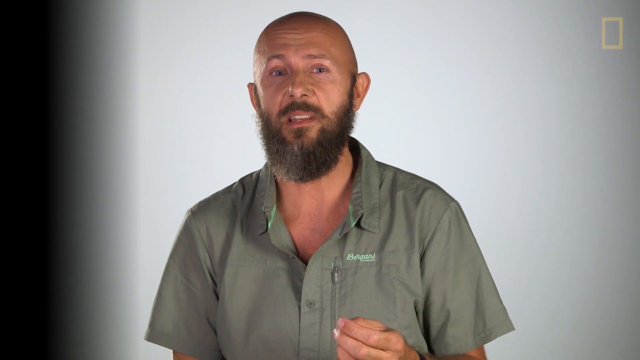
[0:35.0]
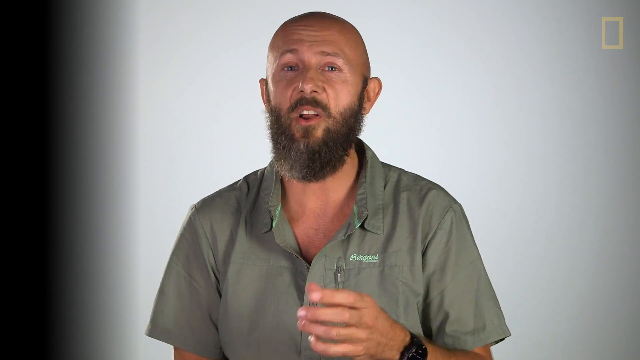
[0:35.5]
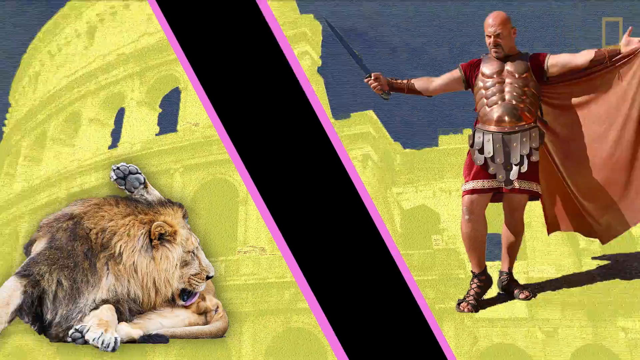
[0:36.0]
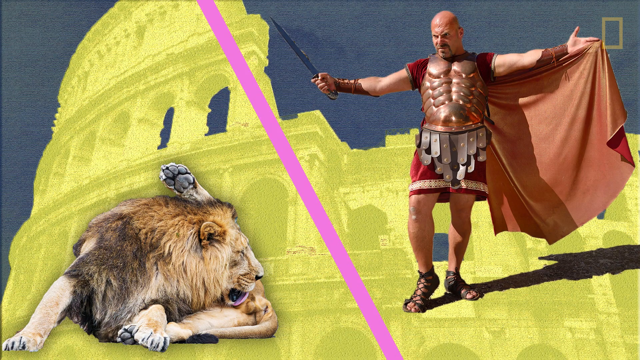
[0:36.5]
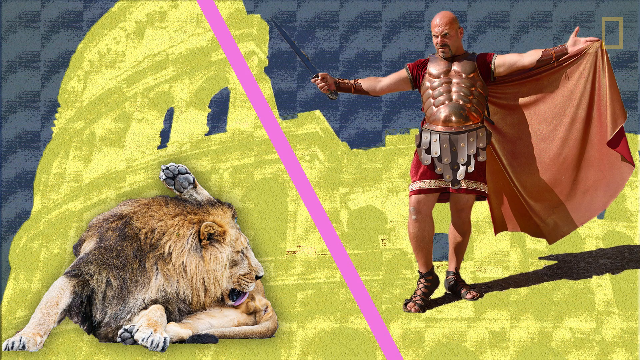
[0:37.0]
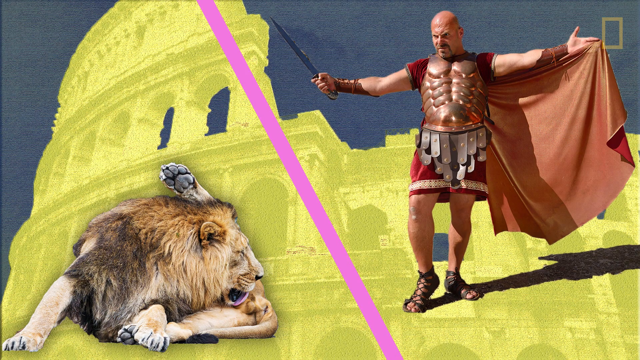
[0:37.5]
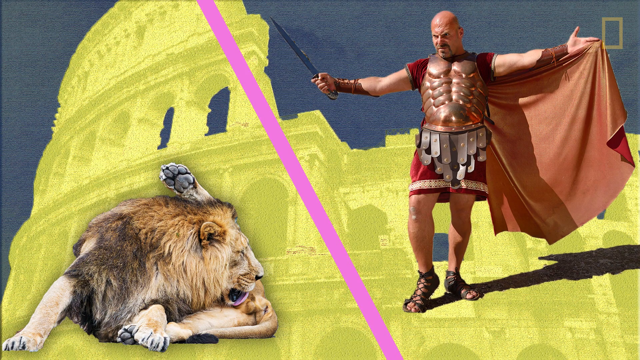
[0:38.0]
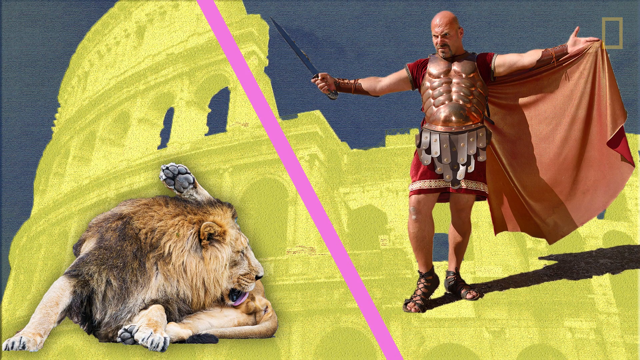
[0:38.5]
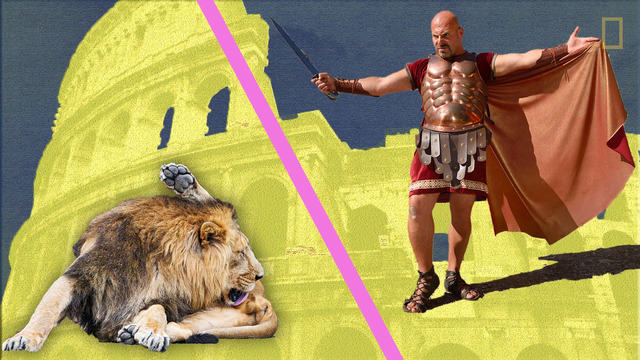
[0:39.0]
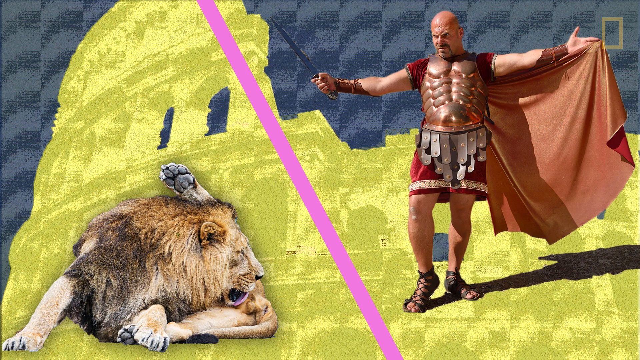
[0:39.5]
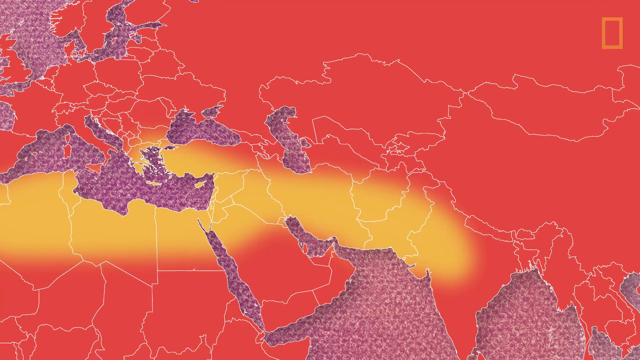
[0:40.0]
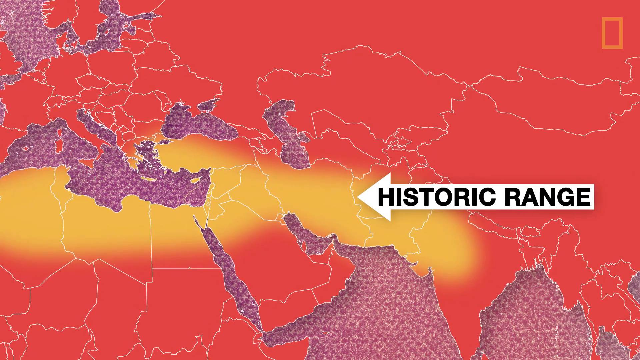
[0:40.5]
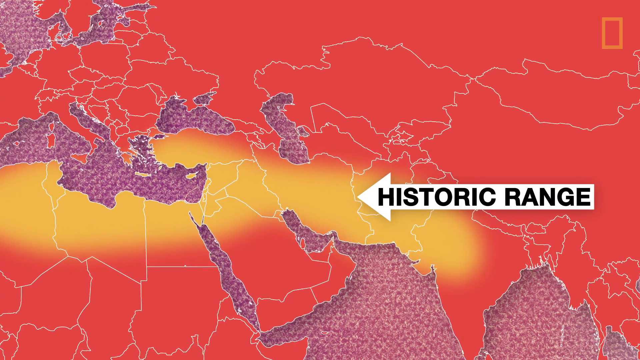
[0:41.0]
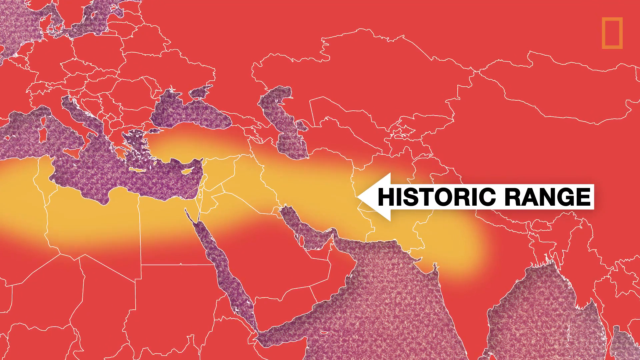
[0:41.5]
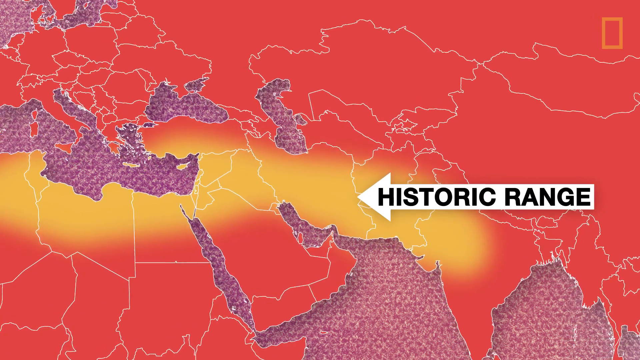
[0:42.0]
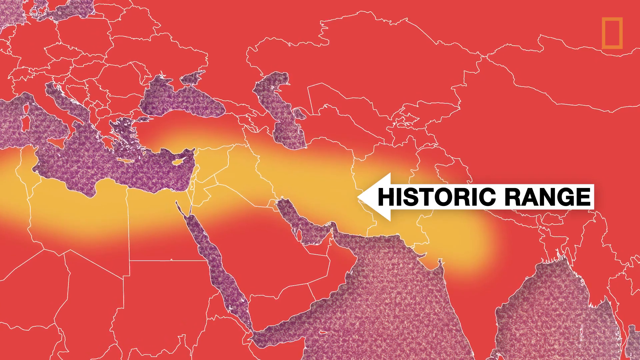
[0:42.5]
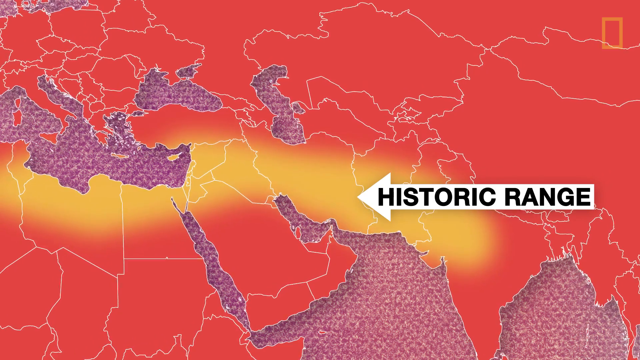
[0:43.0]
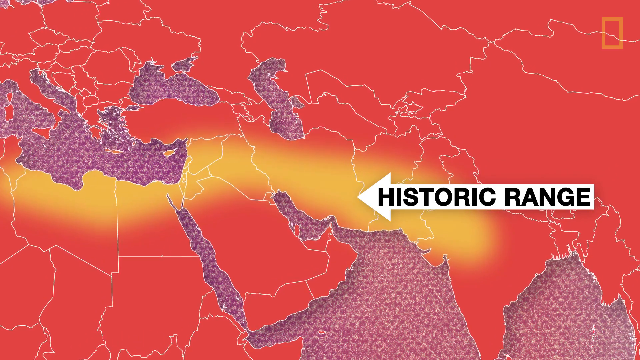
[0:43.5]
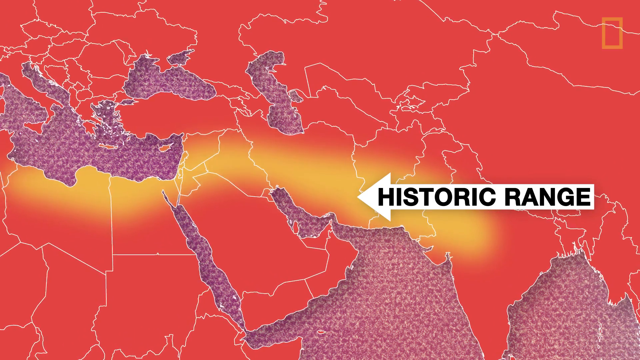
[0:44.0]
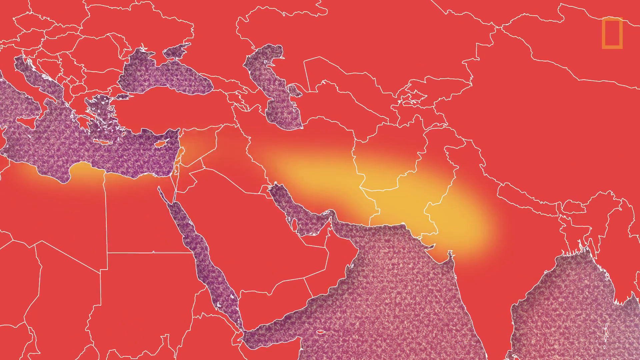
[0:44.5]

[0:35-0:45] The man is seen talking for a second before the video moves to a slideshow about India. It starts with a split screen showing what looks like the man in a Roman kind of costume alongside a lion, with the Colosseum in Rome in the background. Next comes a red slide of India with a white arrow labeled "historic range" pointing toward an area of India, apparently where the lions live.